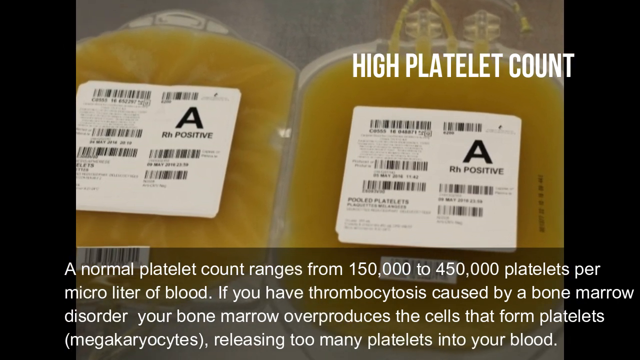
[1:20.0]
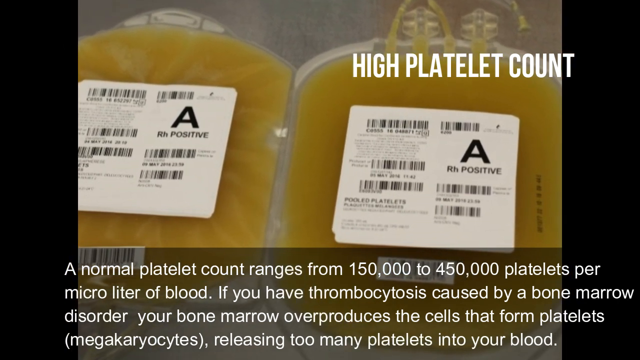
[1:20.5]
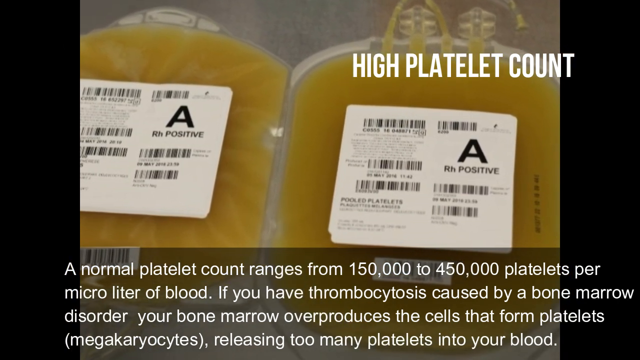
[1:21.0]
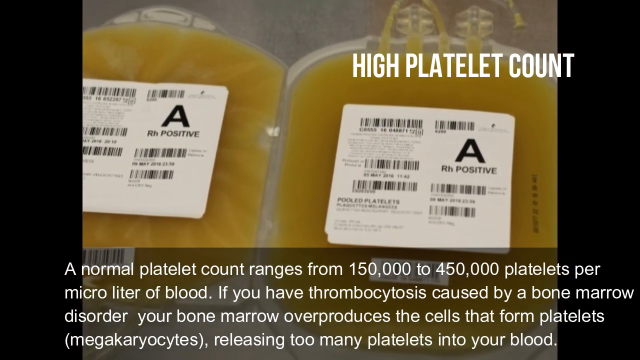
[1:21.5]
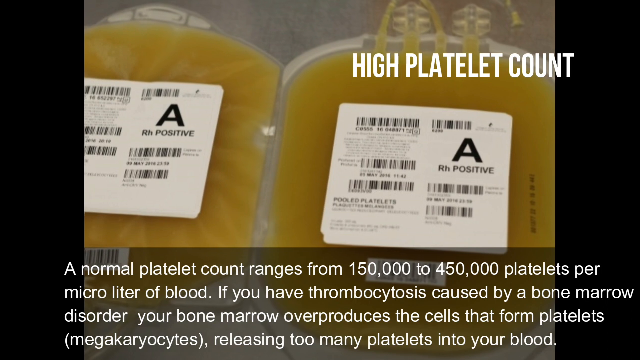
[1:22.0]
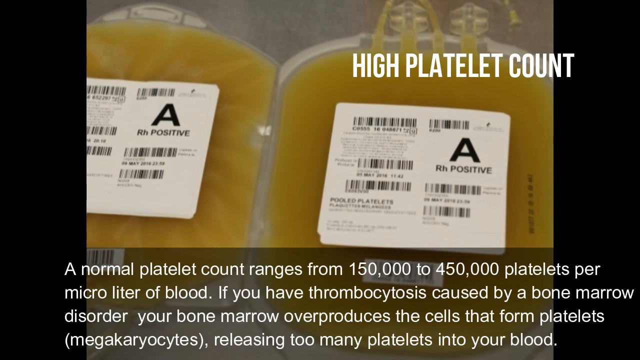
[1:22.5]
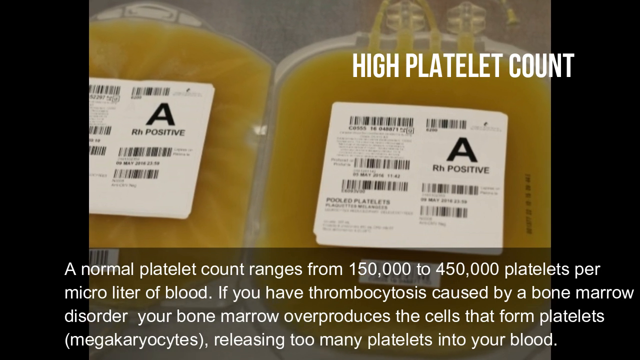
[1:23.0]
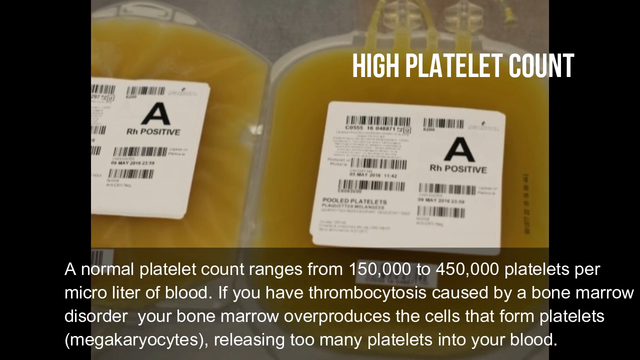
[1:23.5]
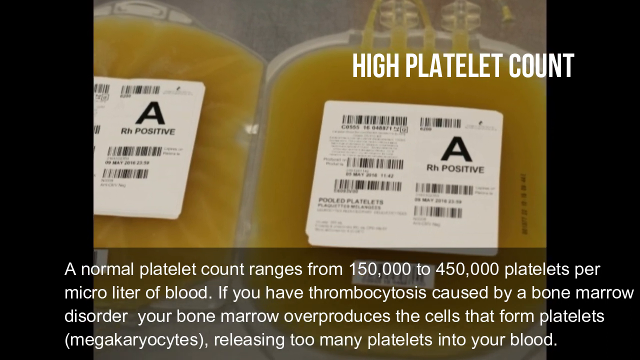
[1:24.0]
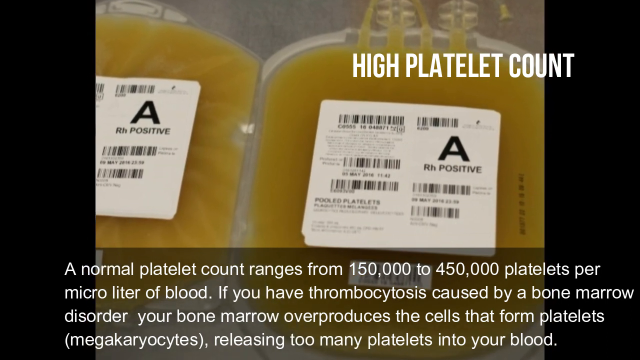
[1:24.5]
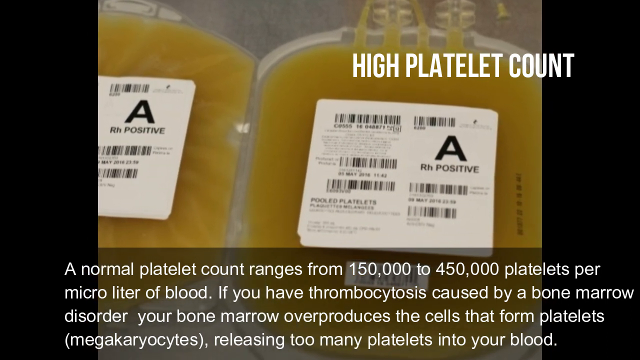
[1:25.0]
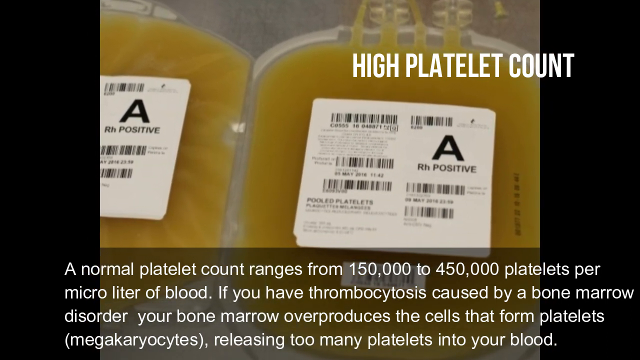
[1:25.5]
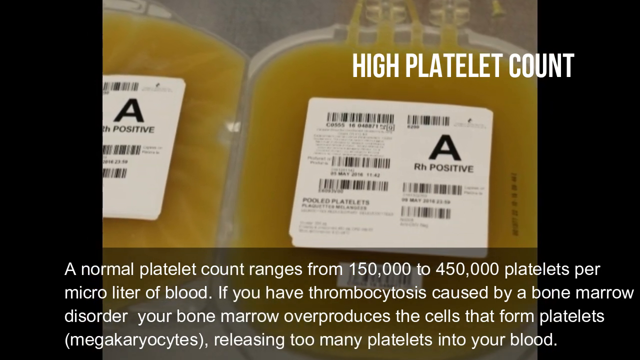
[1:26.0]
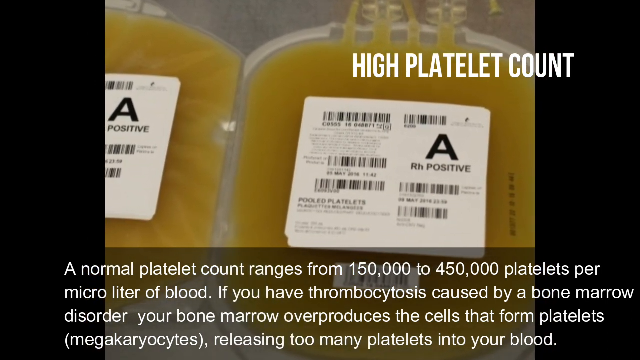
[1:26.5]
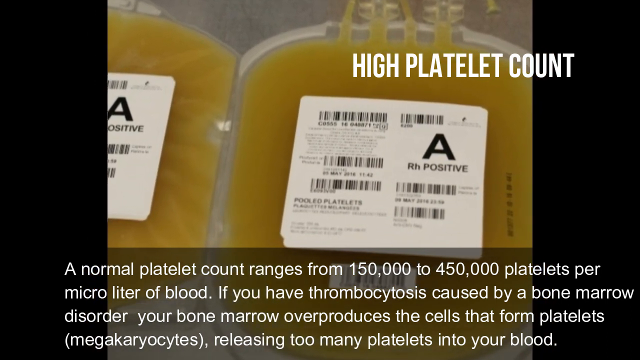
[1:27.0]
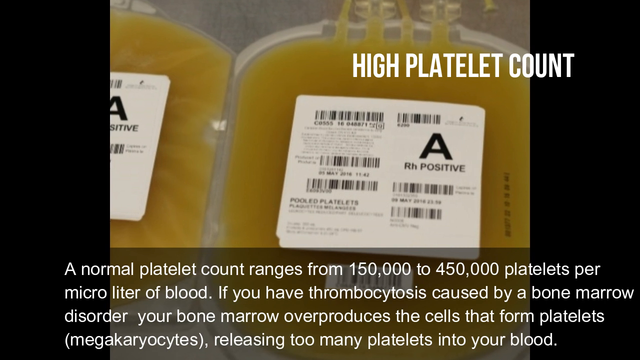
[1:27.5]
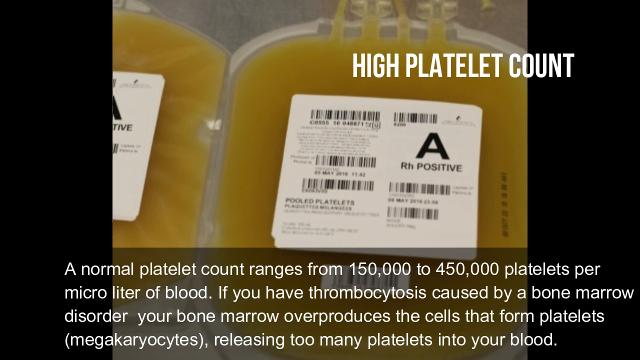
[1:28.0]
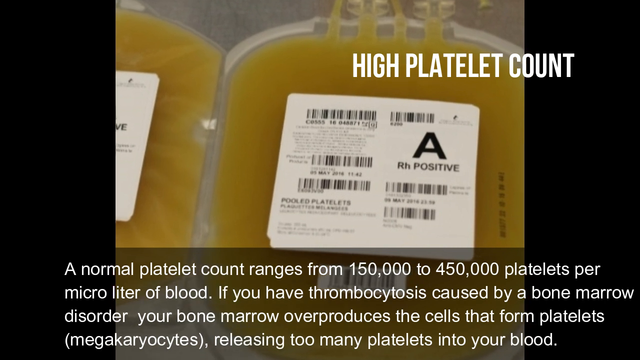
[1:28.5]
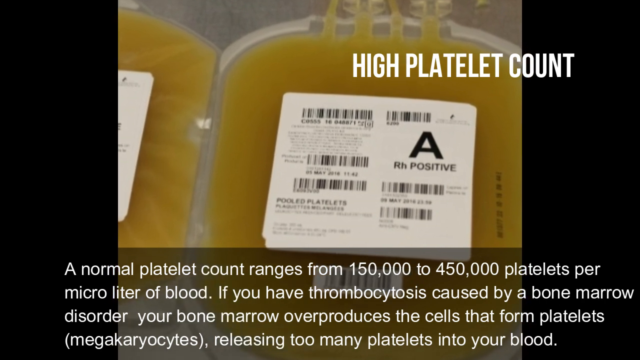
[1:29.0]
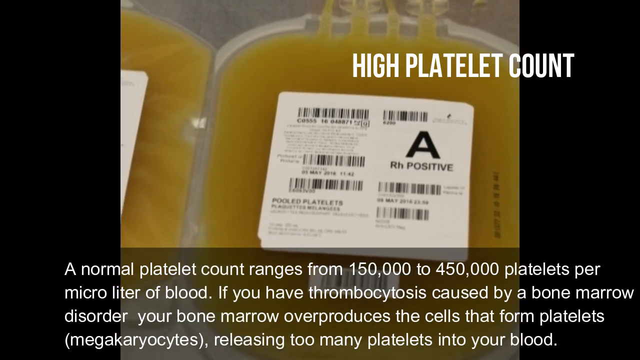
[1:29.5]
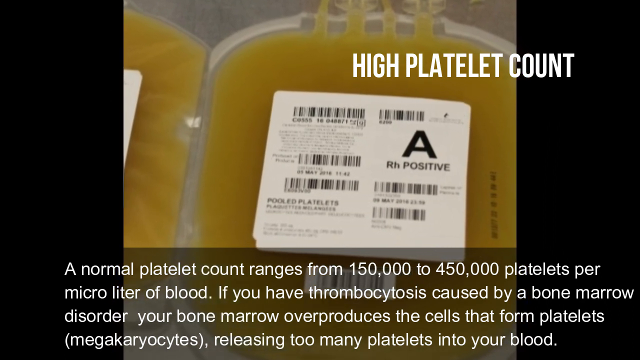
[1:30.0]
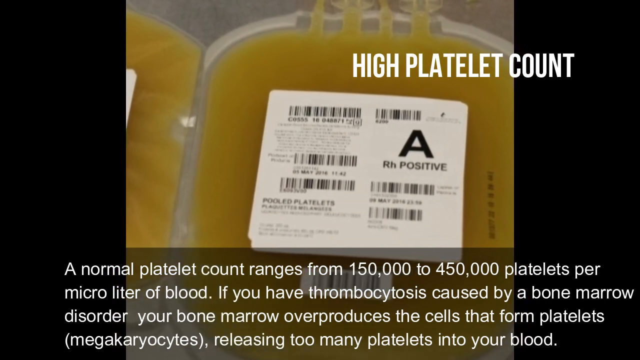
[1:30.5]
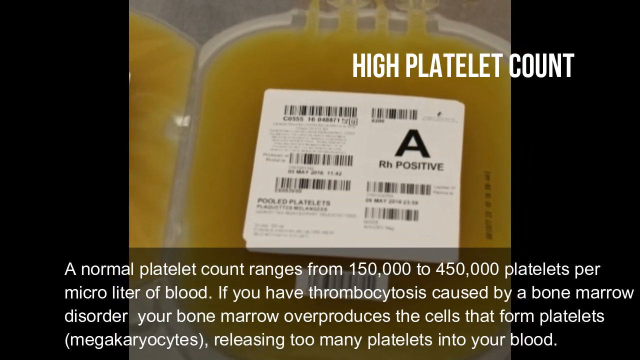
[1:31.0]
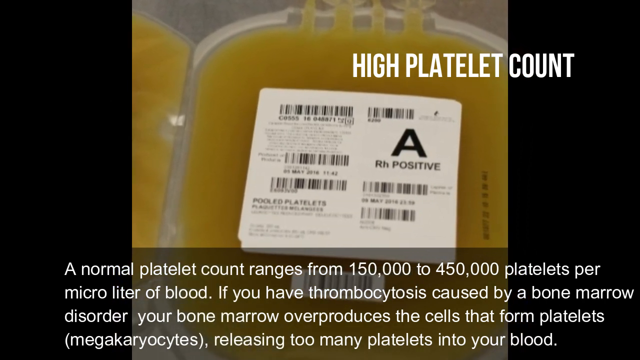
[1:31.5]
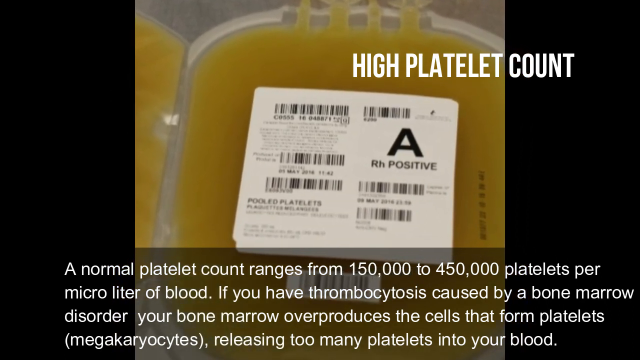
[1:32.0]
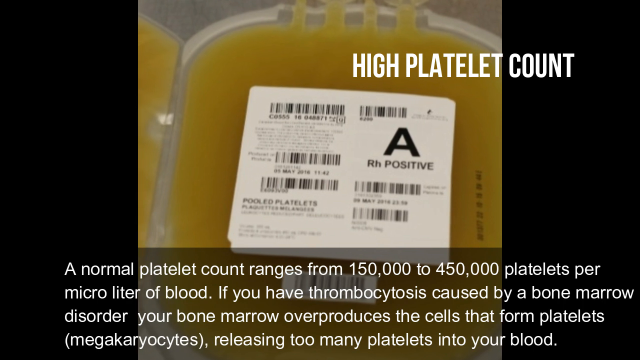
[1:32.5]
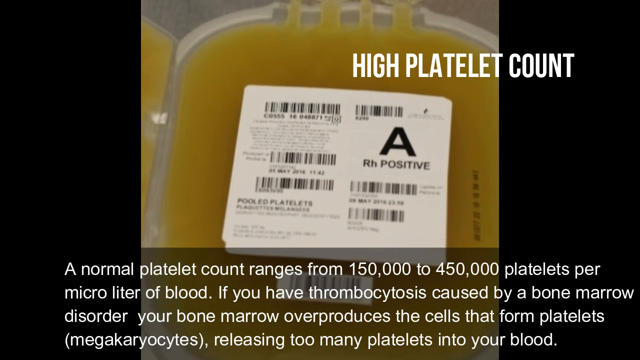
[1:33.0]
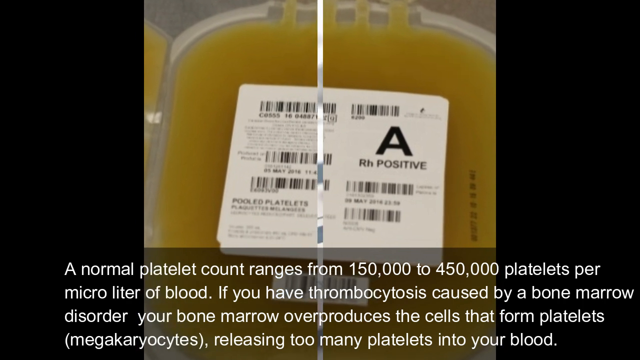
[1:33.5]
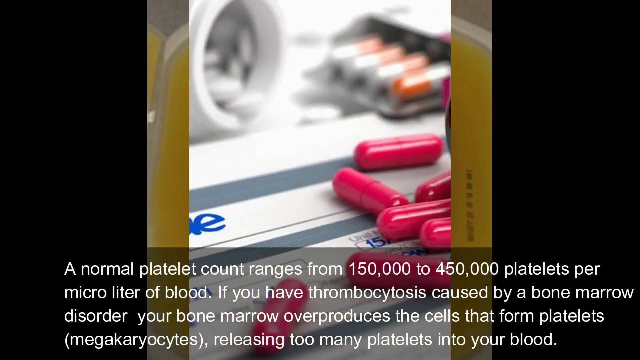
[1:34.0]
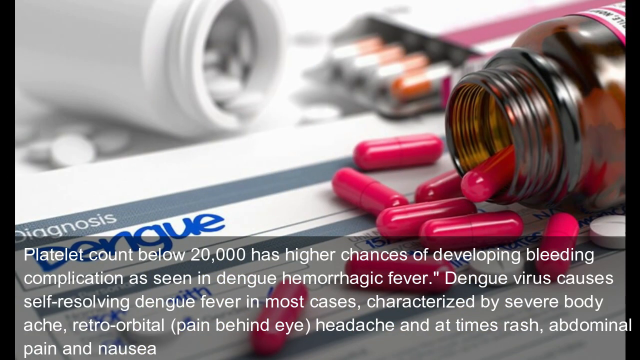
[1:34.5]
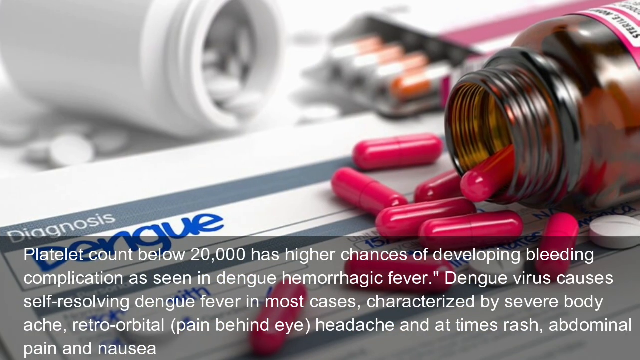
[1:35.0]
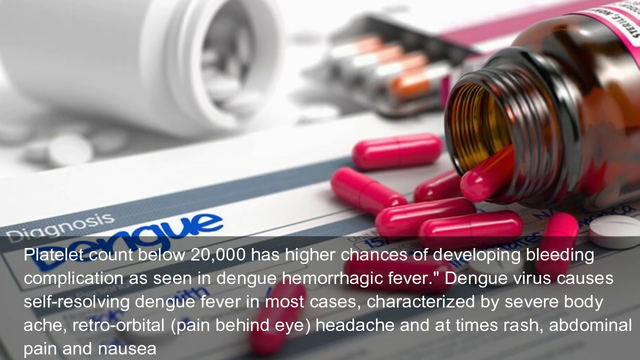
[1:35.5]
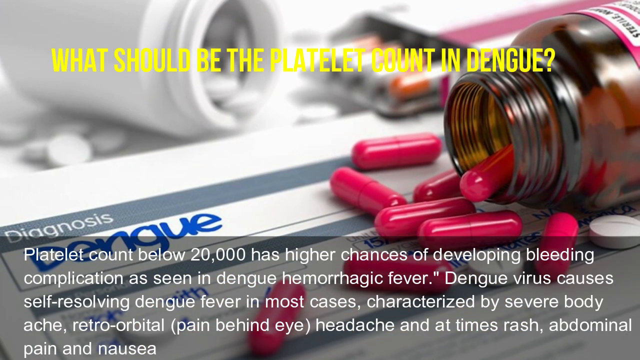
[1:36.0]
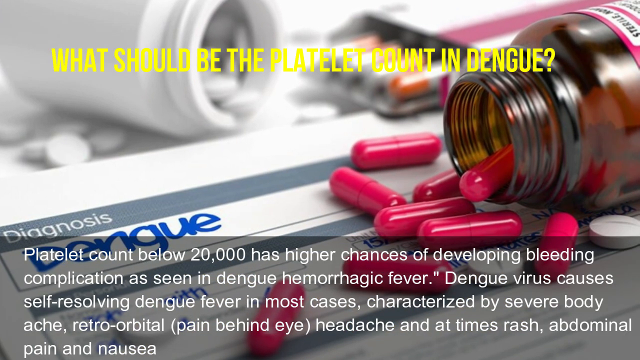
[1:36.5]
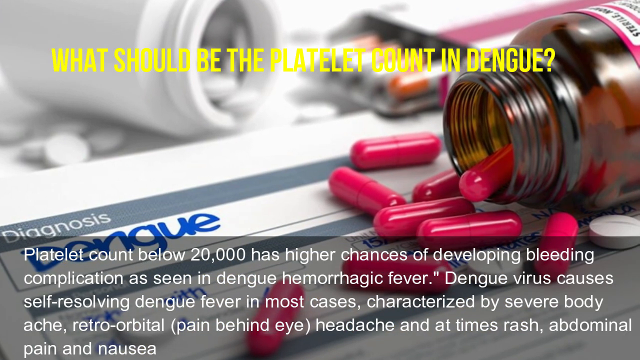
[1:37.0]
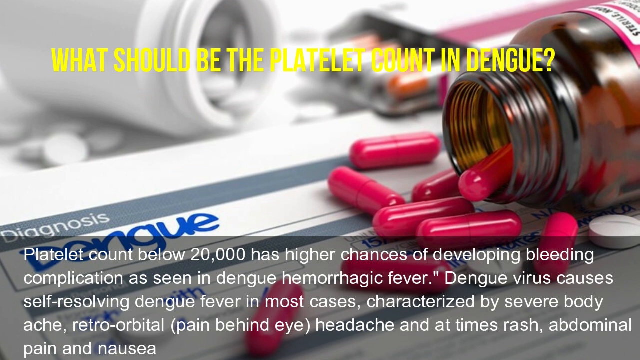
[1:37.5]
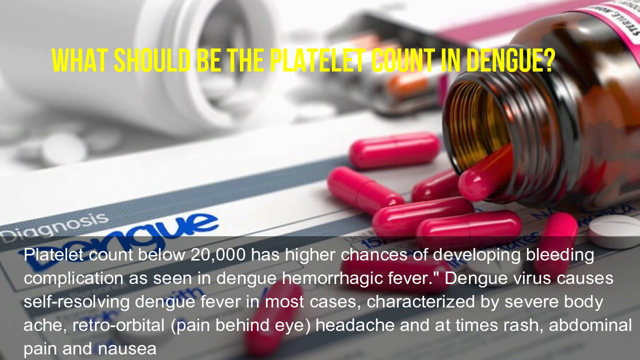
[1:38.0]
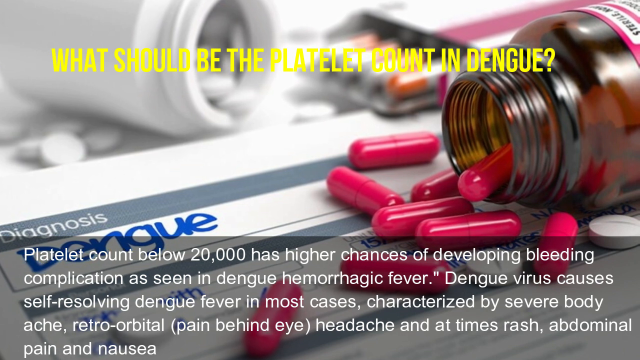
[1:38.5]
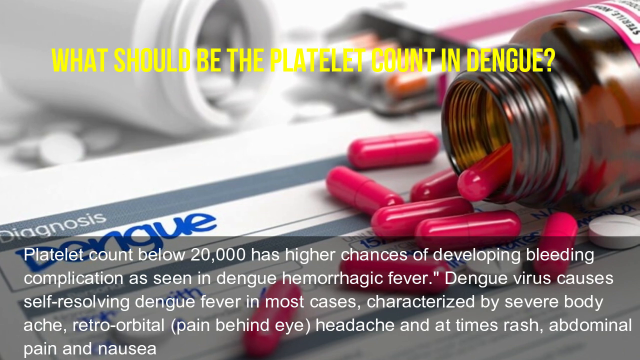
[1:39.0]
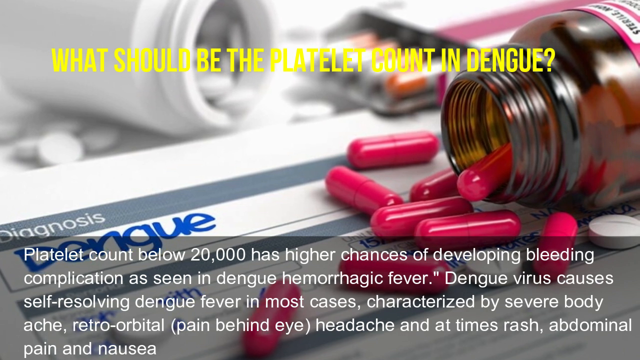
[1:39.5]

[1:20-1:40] The words "high platelet count" appear at the bottom of the screen, along with the text "A normal platelet count ranges from 150,000 to 450,000 platelets per microliter of blood. If you have thrombocytosis caused by a bone marrow disorder, your bone marrow overproduces the cells that form platelets, megakaryocytes, releasing too many platelets into your blood." This is against a black background. Next, text reads: "Platelet count below 20,000 has higher chances of developing bleeding complication as seen in dengue hemorrhagic fever. Dengue virus causes self-resolving dengue fever in most cases characterized by severe body ache, retro-orbital pain behind eye headache, and at times rash, abdominal pain, and nausea." This part opens with two plastic bags full of a yellow-looking liquid, each with a label. Both labels have a large letter "A" in the upper right corner, and there are several barcodes.